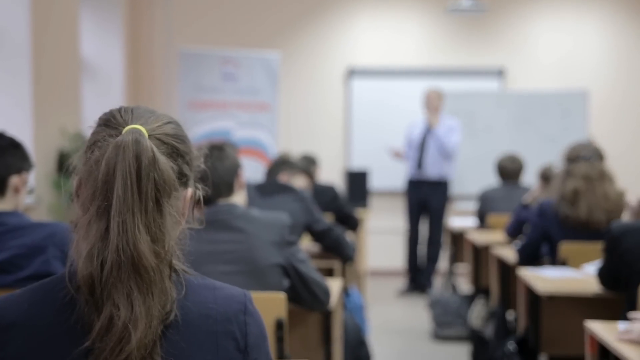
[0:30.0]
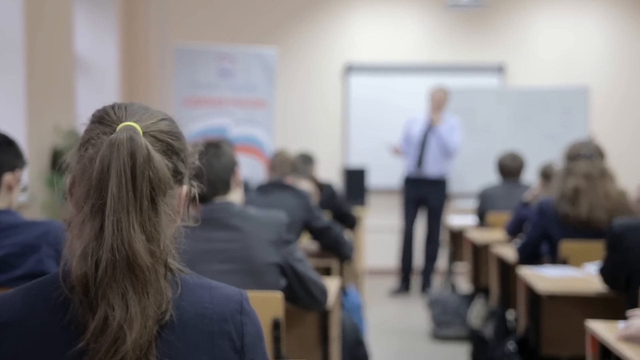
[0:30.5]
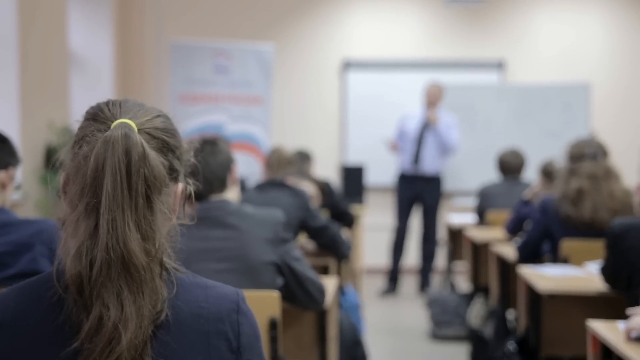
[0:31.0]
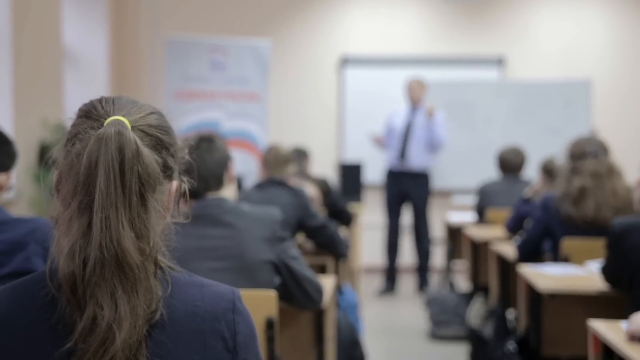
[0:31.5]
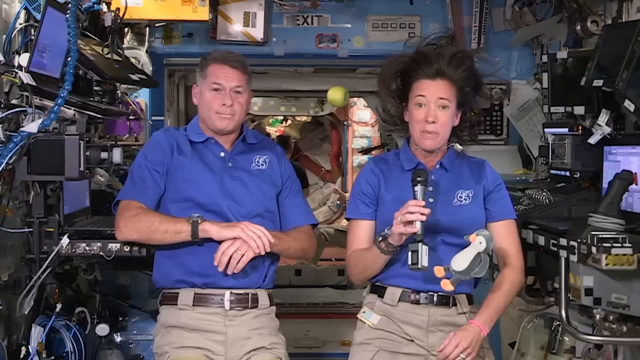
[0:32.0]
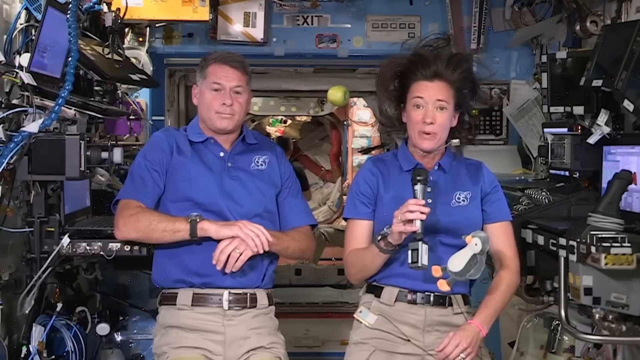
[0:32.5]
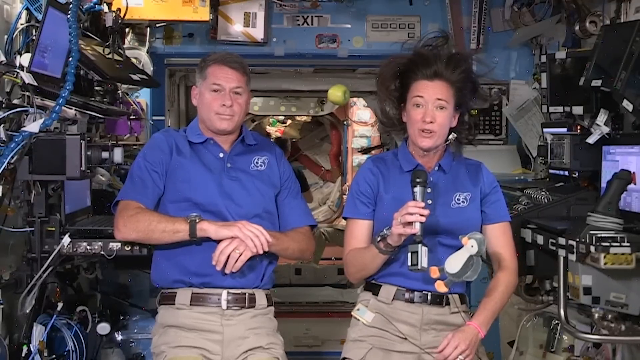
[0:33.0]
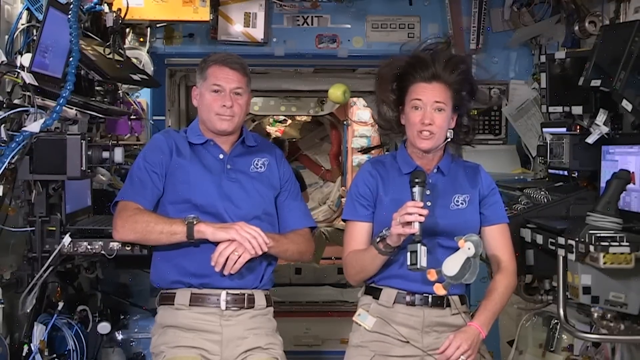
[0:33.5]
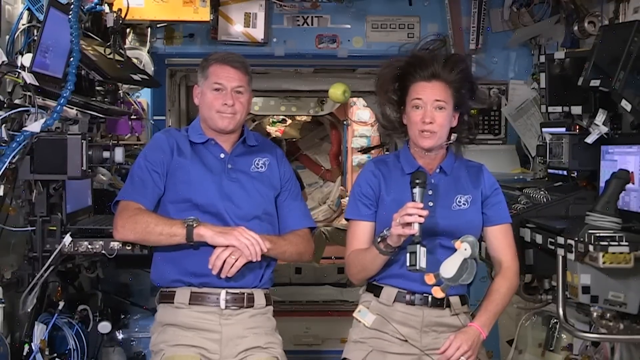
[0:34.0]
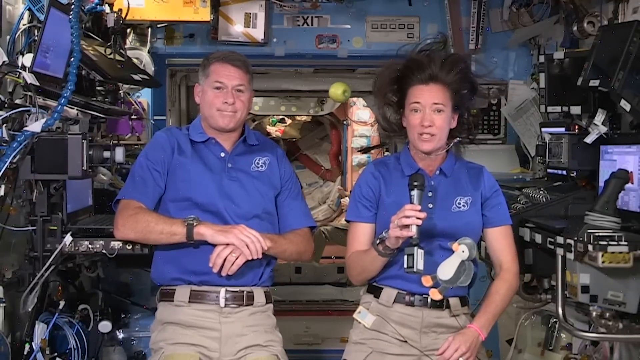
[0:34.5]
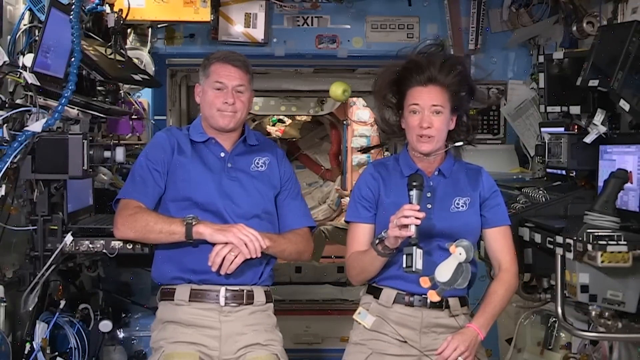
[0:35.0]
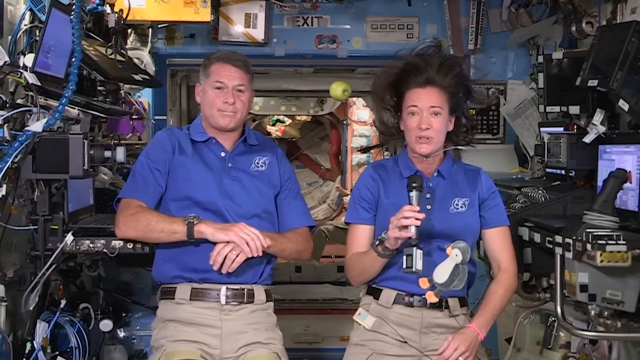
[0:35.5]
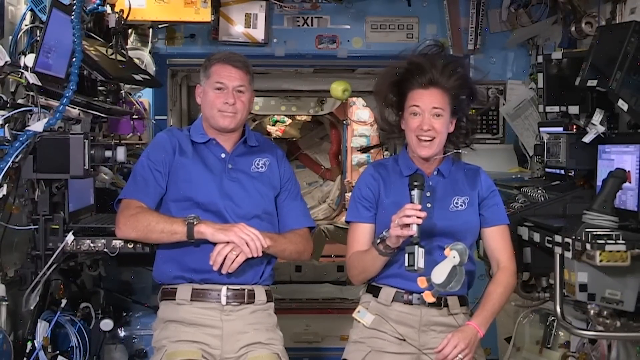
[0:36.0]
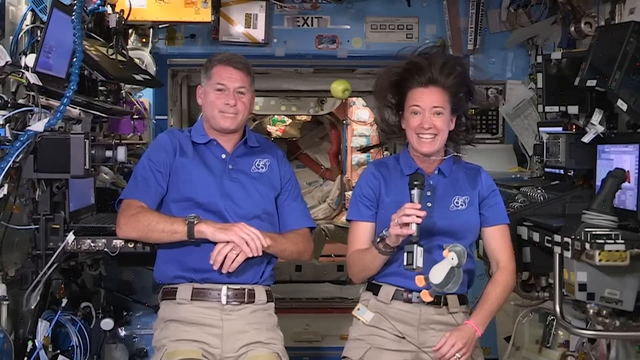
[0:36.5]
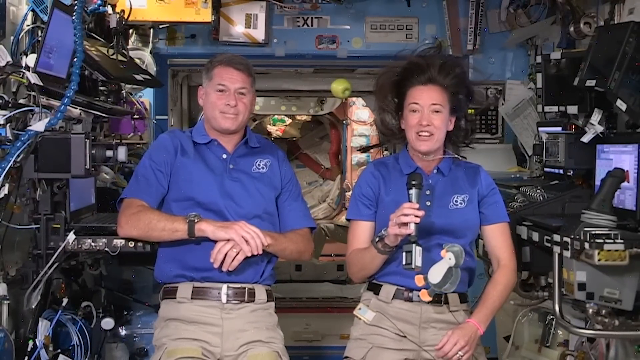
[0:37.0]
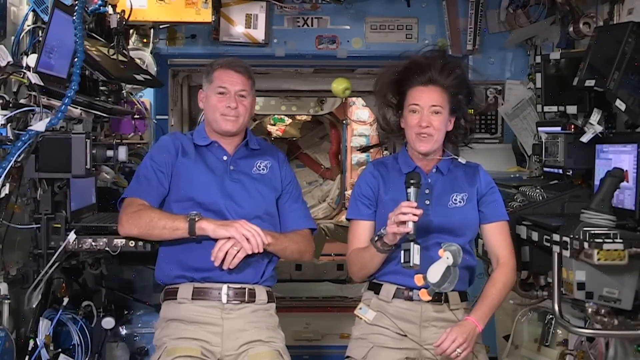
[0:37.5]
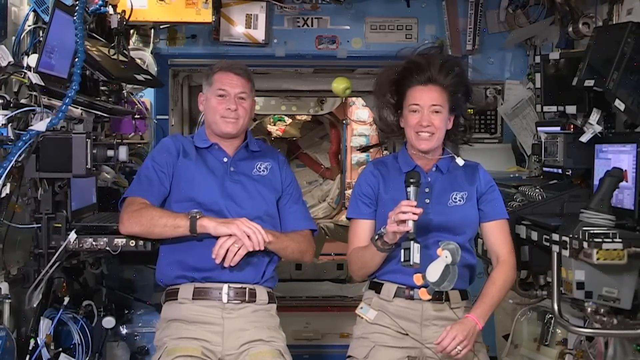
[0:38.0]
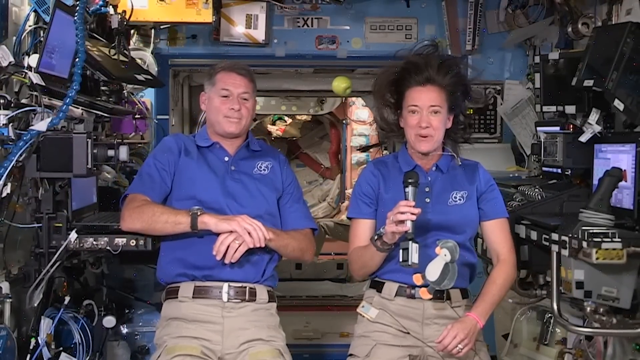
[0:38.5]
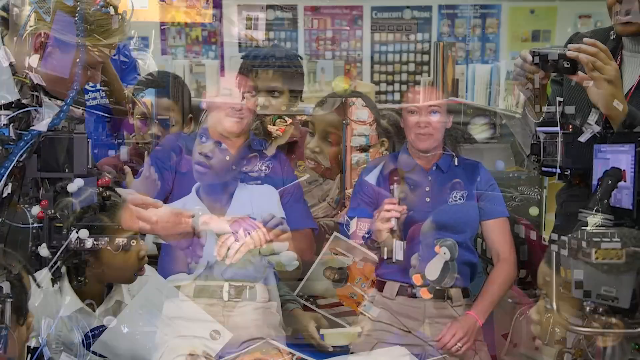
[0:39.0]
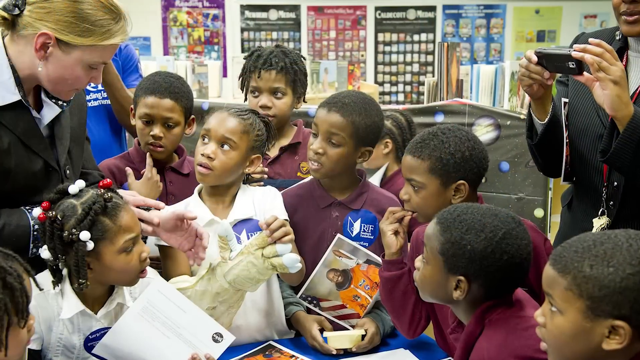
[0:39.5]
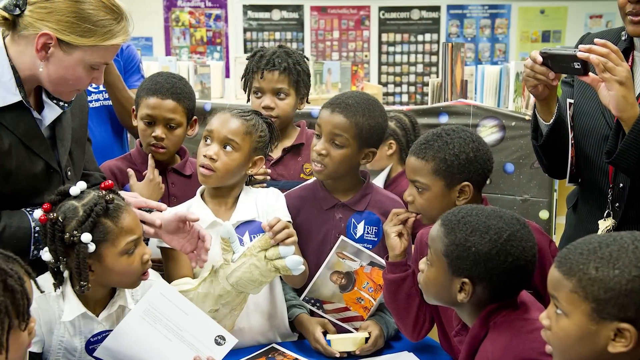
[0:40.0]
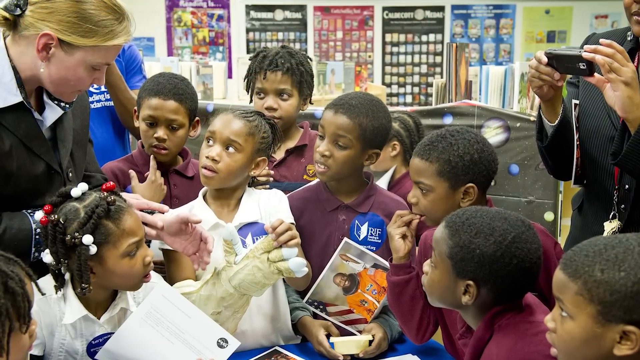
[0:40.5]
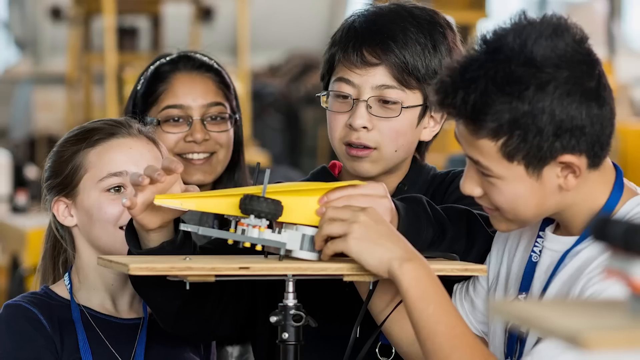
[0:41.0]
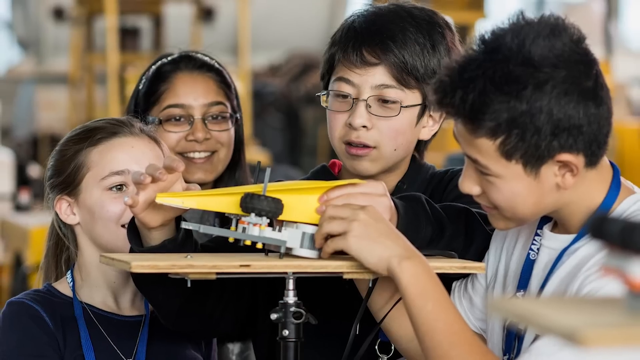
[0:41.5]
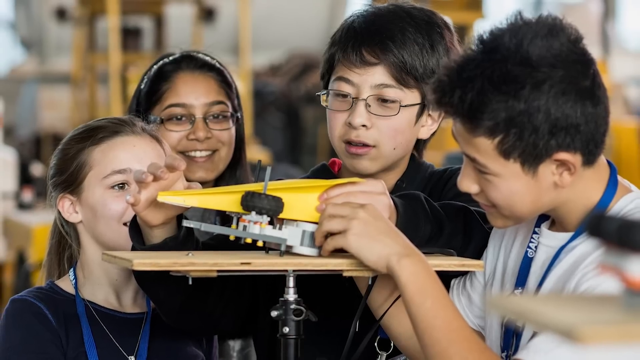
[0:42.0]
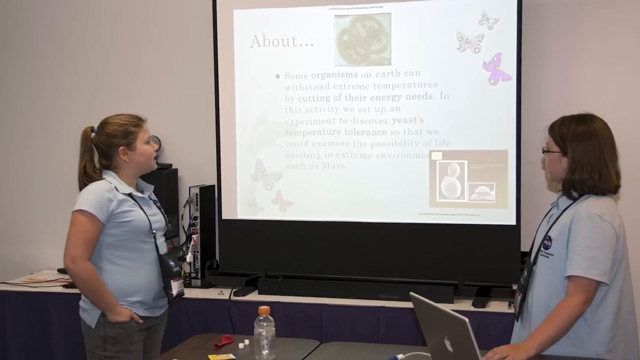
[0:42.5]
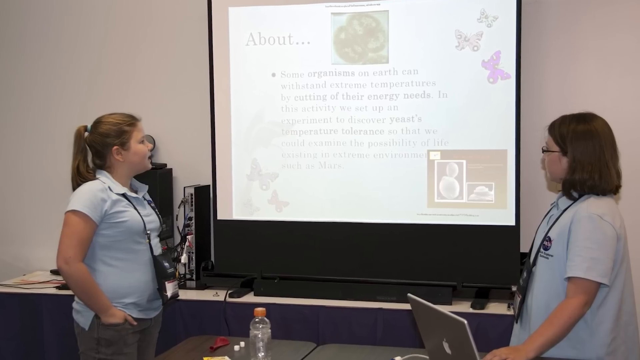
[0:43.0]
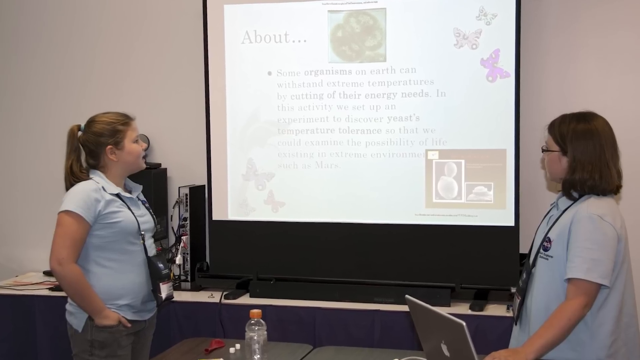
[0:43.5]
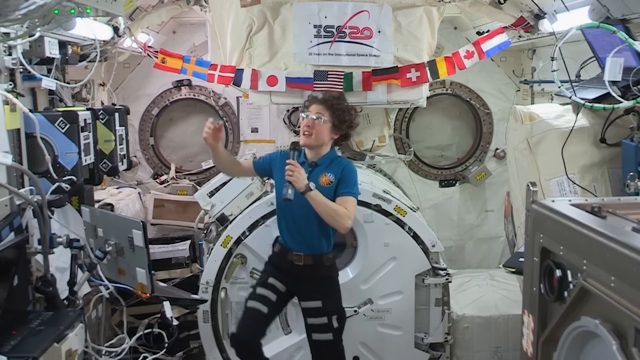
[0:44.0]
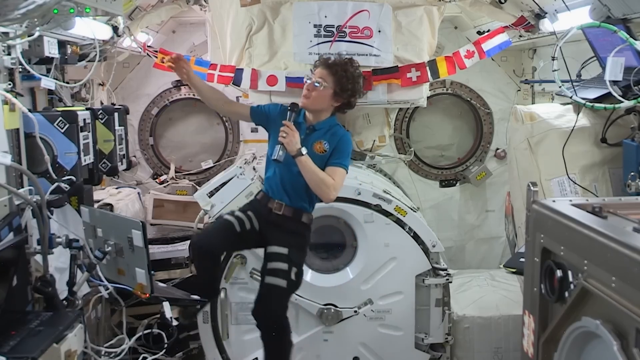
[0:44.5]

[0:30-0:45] The classroom scene lasts a few seconds, then the video cuts back to the two astronauts on the space station doing an interview. Several pictures follow of students being introduced to space travel, astronauts and NASA. In one, a group of African-American students appears to be shown pictures of African-American astronauts by a woman in a suit, possibly an astronaut, with lots of press around them taking pictures. Next is a picture of students working on some sort of science project, unclear what exactly, with about four students, two boys and two girls. Then there is what appears to be a picture of two girls giving a presentation, possibly about something space-related. Finally, a clip shows a man in the same room of the ISS seen before, with all the flags floating around; he holds a microphone and appears to be giving some sort of presentation.